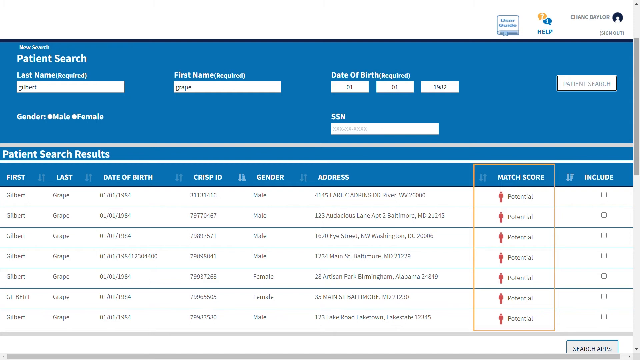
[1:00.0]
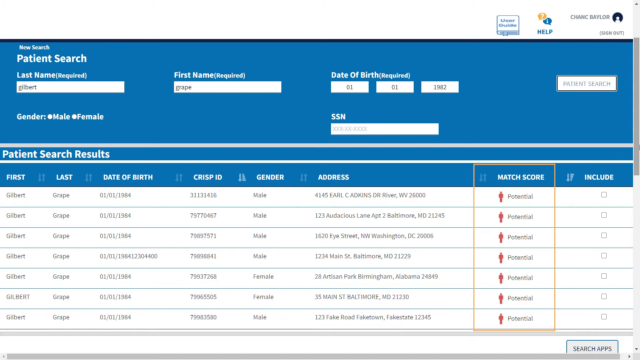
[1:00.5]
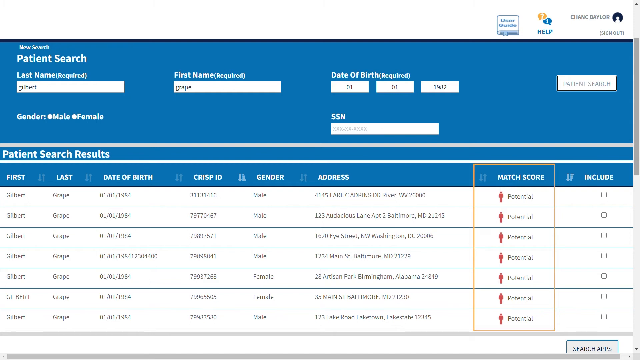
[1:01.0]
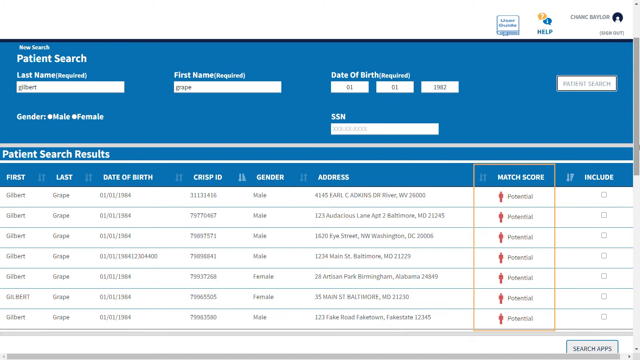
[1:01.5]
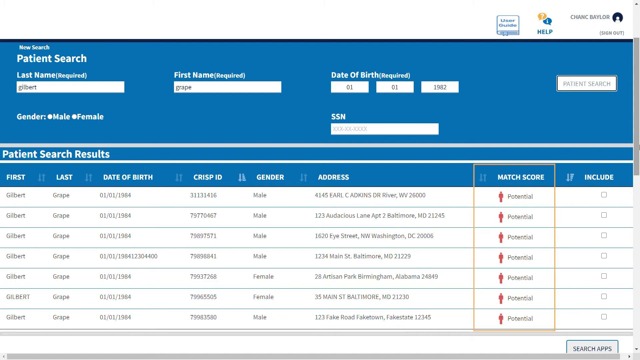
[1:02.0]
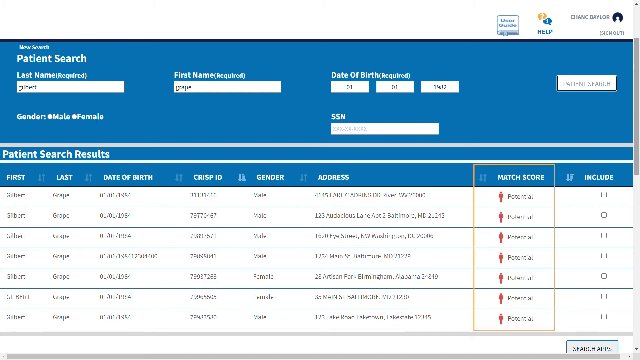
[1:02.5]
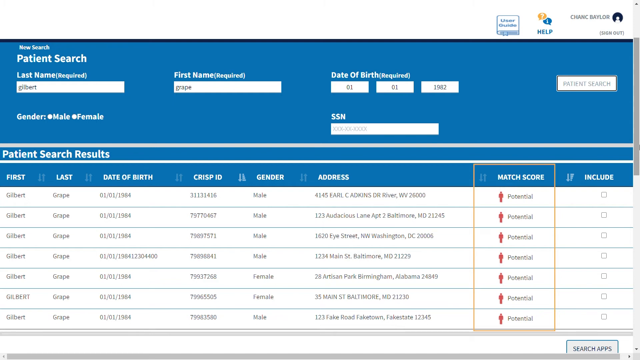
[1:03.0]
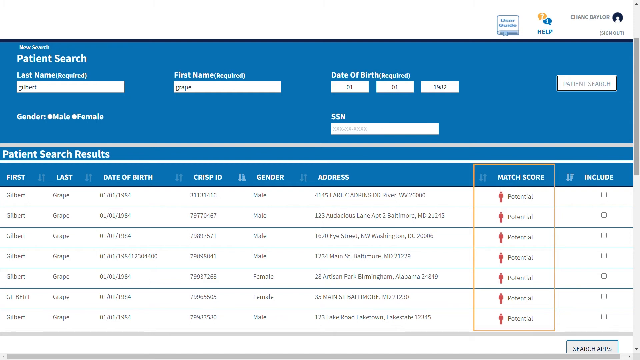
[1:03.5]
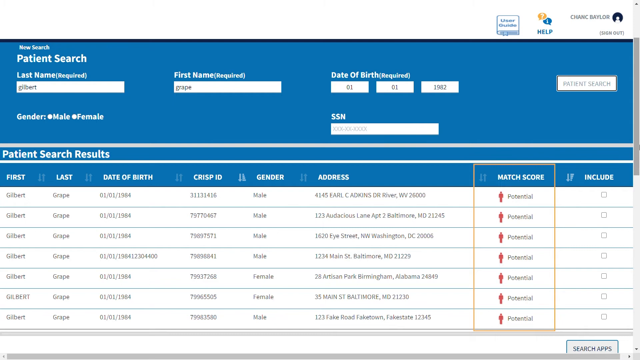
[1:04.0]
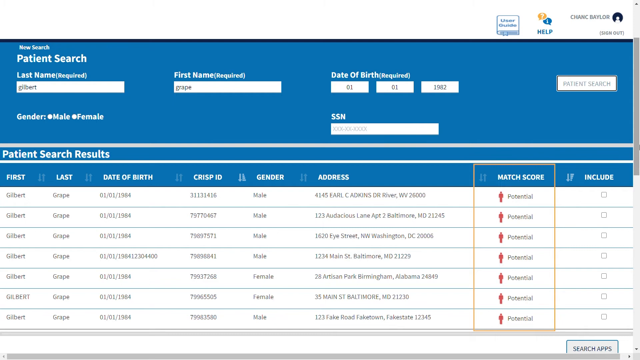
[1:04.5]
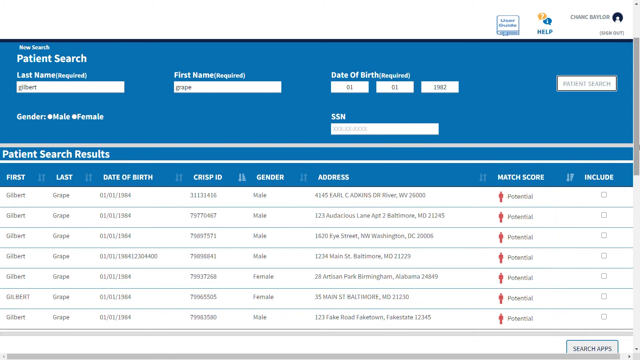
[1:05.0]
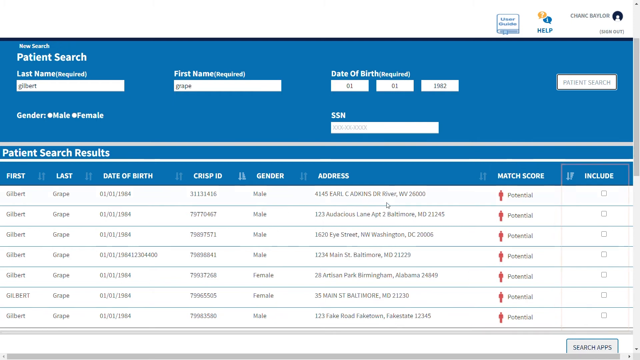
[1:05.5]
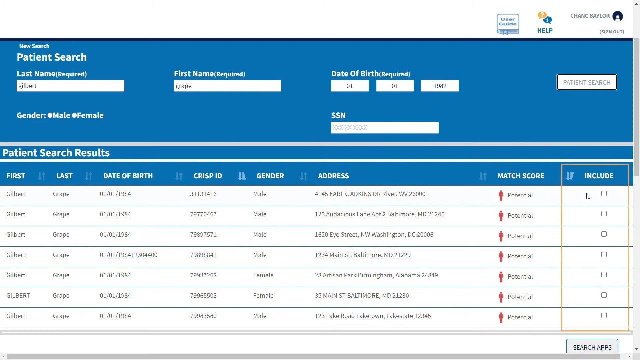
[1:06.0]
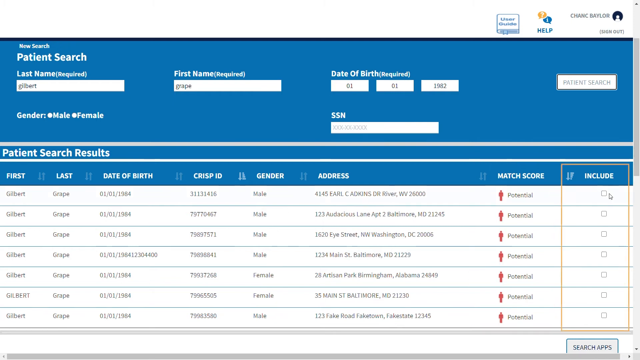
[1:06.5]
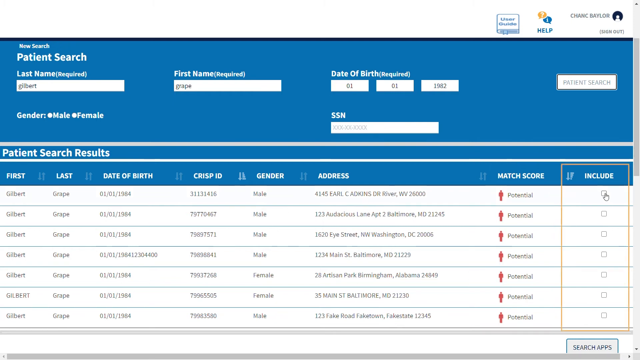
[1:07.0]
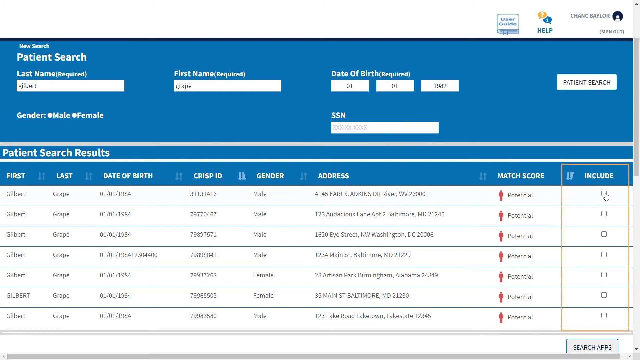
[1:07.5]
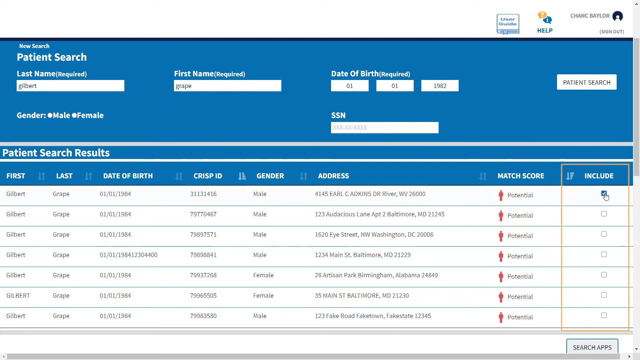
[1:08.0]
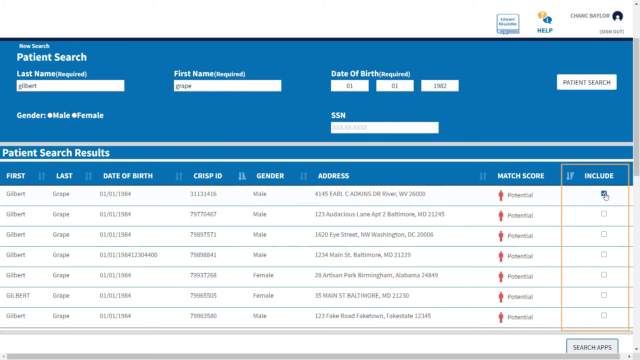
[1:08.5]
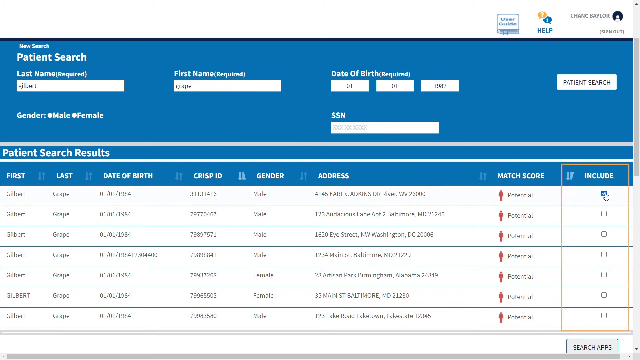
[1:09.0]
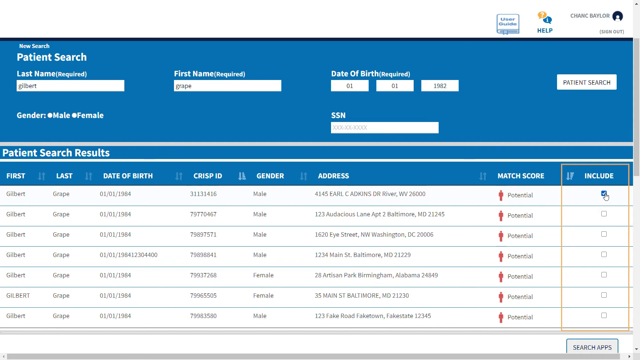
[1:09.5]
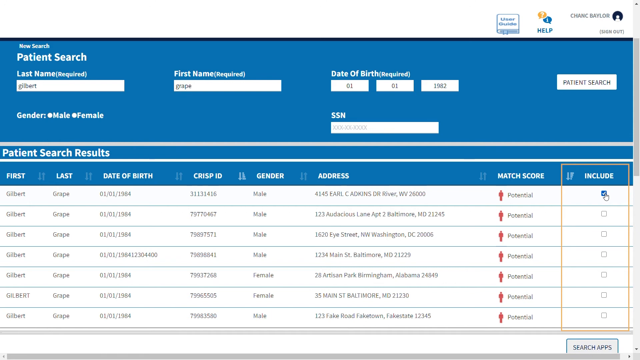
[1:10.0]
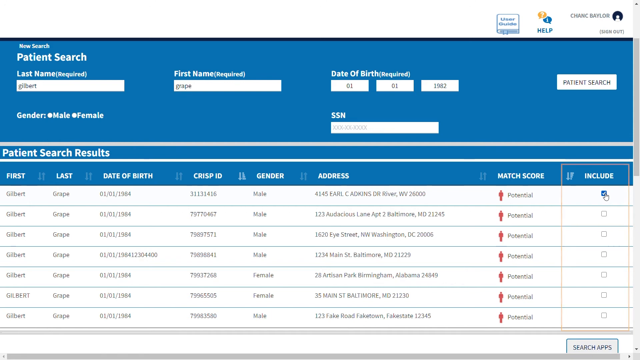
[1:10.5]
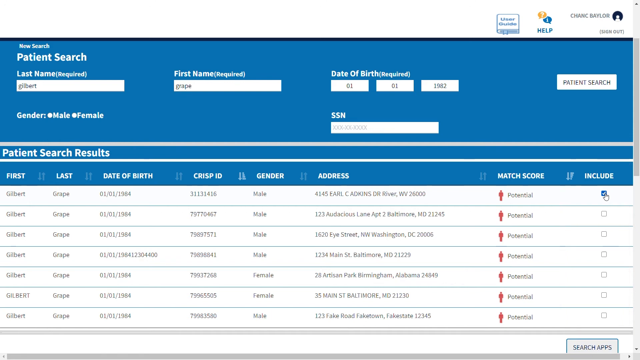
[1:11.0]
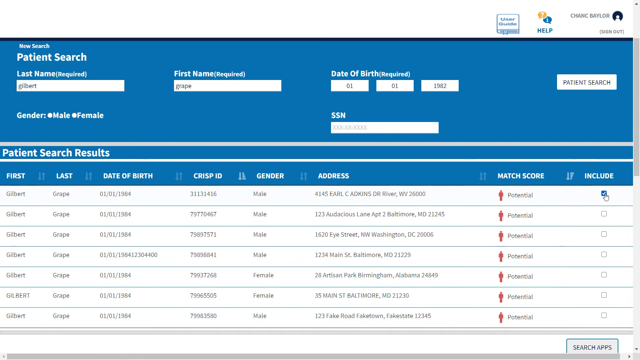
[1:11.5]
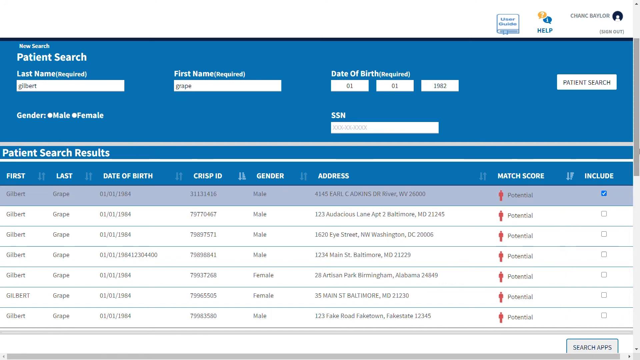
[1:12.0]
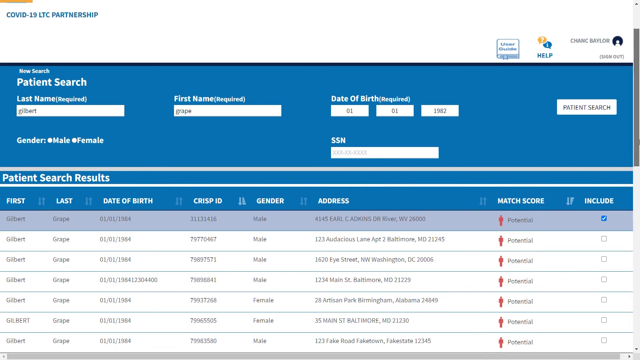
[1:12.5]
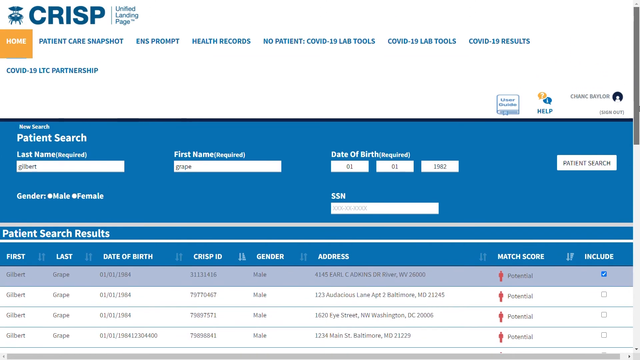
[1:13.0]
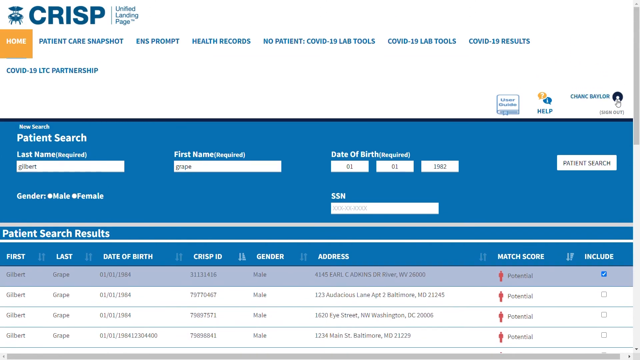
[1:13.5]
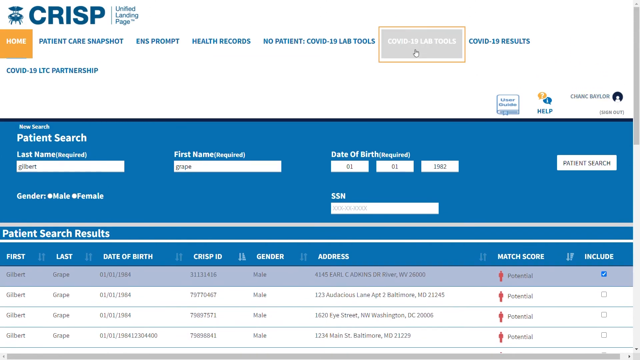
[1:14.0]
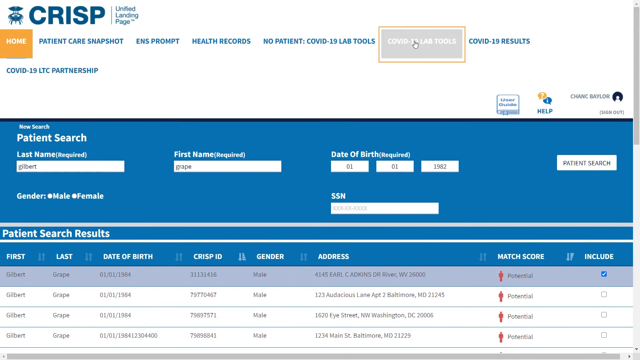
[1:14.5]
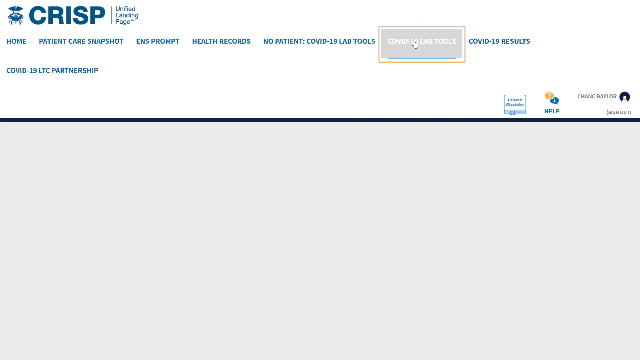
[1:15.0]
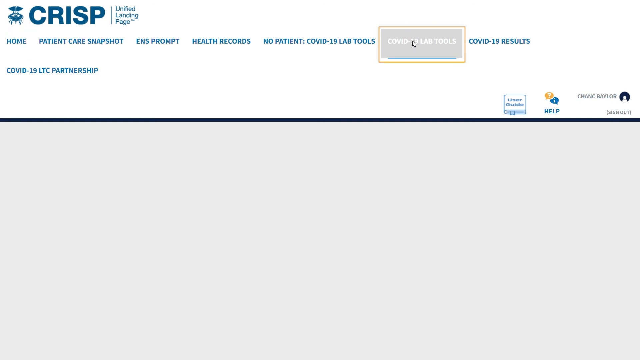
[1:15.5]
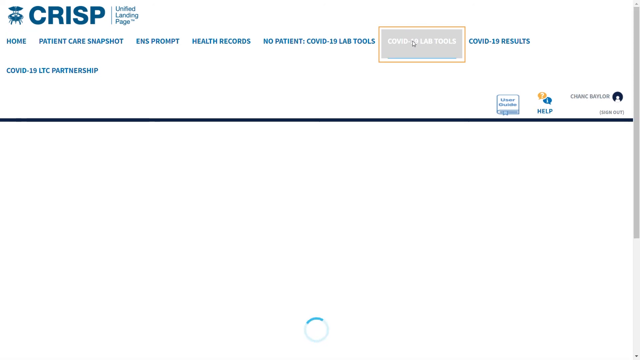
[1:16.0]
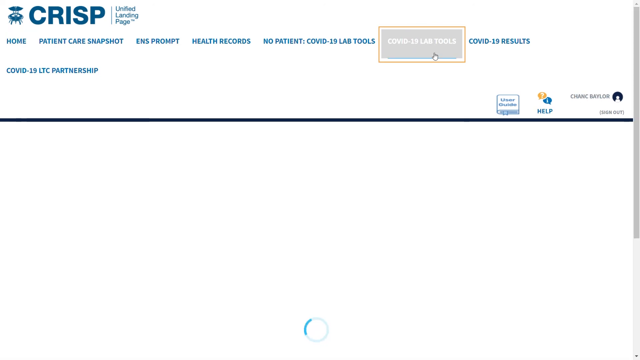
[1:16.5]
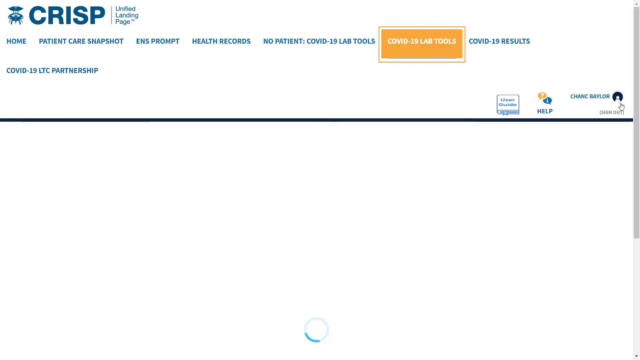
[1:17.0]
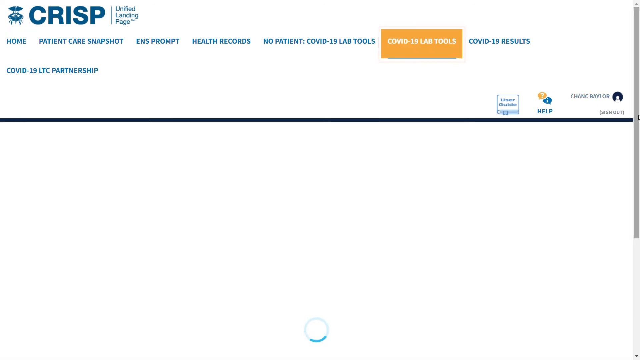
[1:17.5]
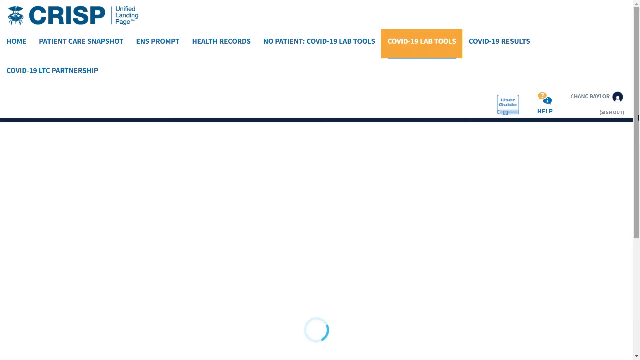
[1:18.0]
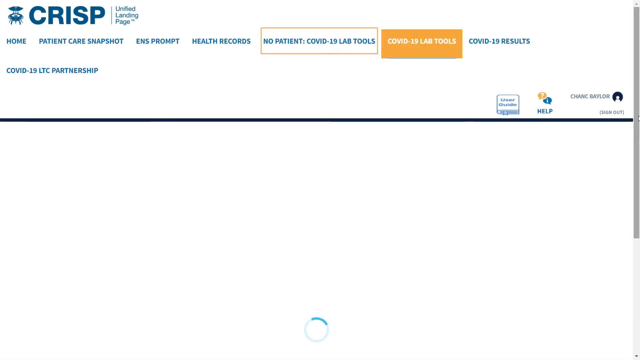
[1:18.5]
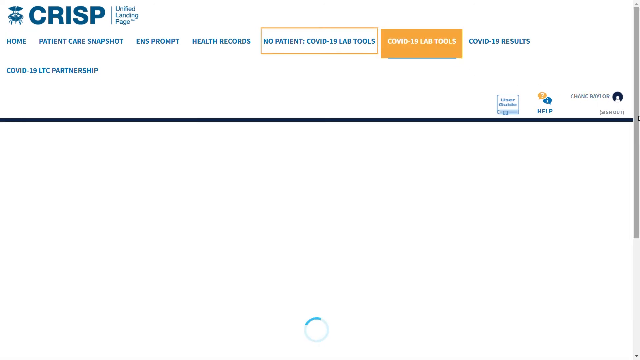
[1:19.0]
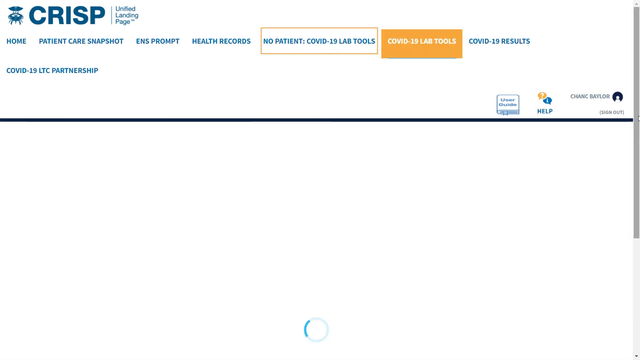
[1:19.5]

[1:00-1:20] The patient search page shows that the person is male; further down are entries for a female and the addresses of the patients. The search results list patients' names and addresses, with columns for CRISP ID (ID numbers), gender, first name, last name, date of birth, address, match score and include. The match score column shows a red icon of people. The cursor moves over to the include column, where the entries might be family members, and clicks the first one, then the first search and then COVID lab tools. The screen goes somewhat blank while a small round buffering circle spins, and then the patient search page returns.